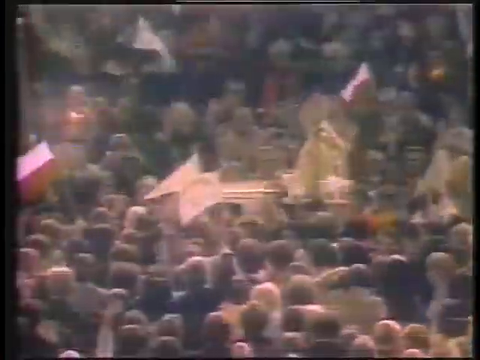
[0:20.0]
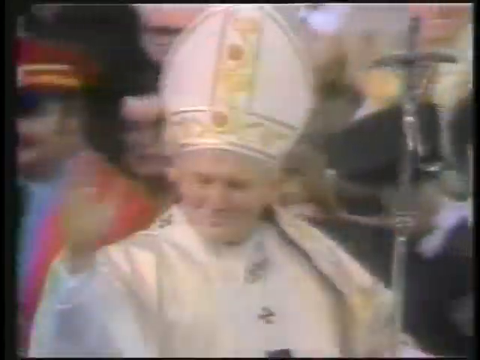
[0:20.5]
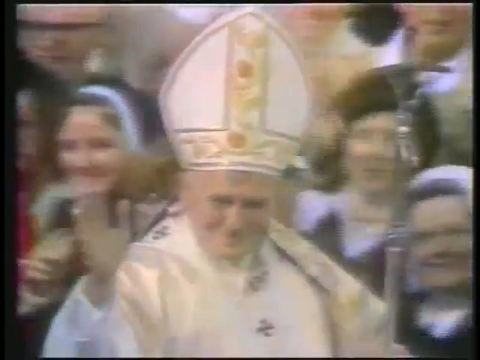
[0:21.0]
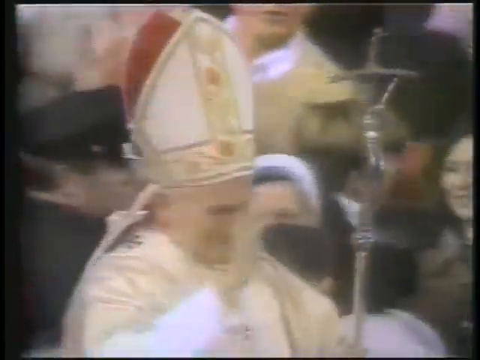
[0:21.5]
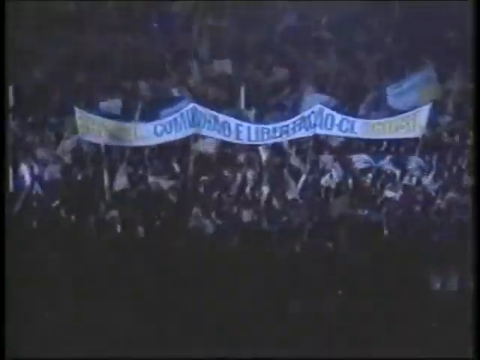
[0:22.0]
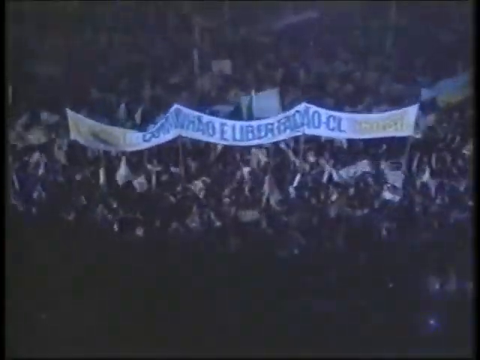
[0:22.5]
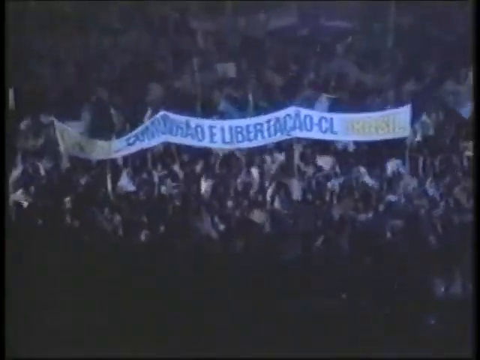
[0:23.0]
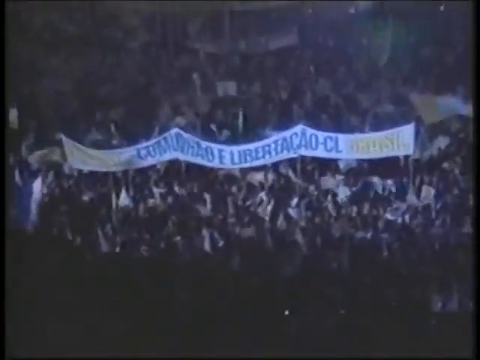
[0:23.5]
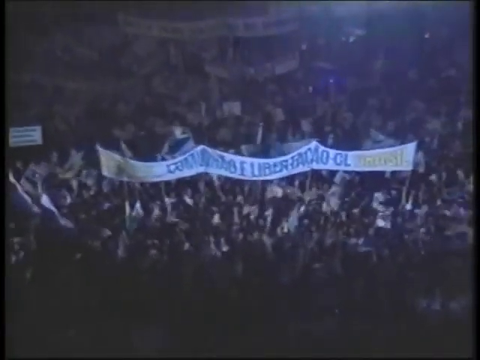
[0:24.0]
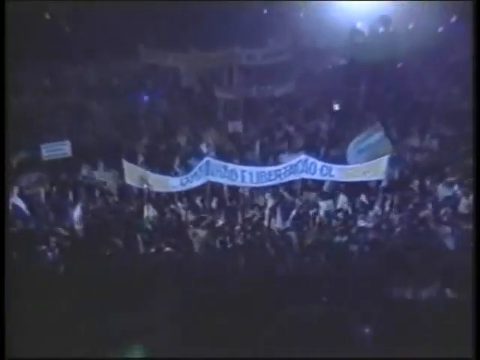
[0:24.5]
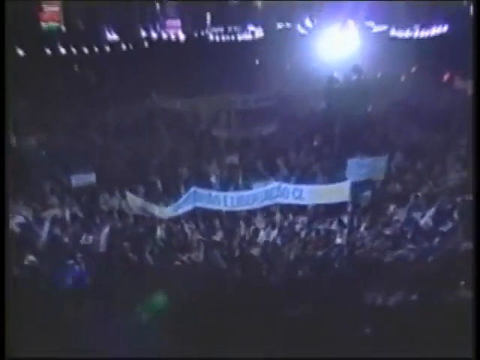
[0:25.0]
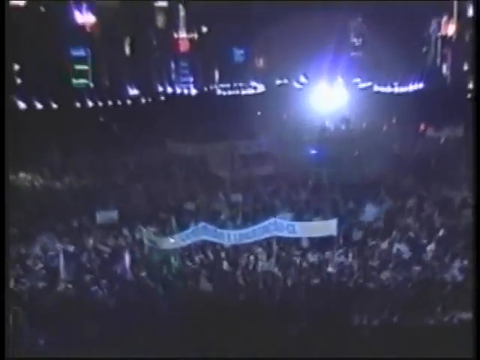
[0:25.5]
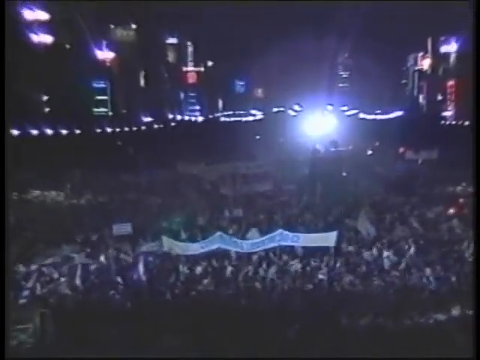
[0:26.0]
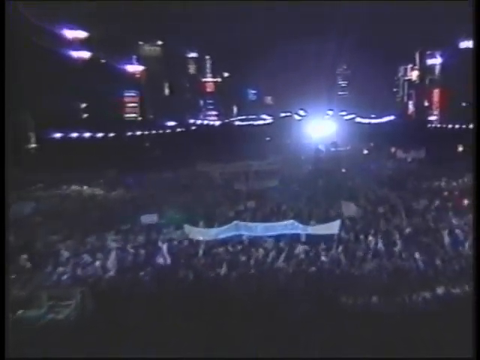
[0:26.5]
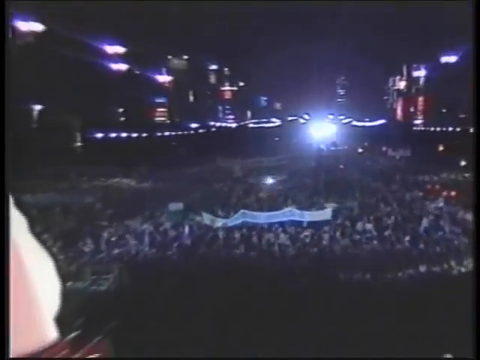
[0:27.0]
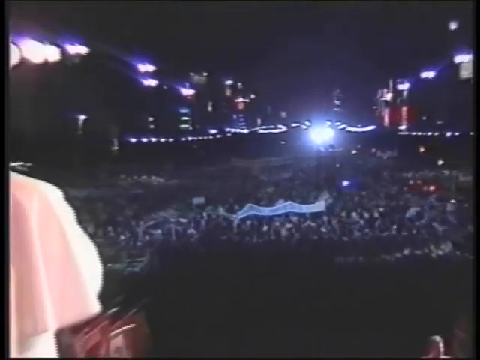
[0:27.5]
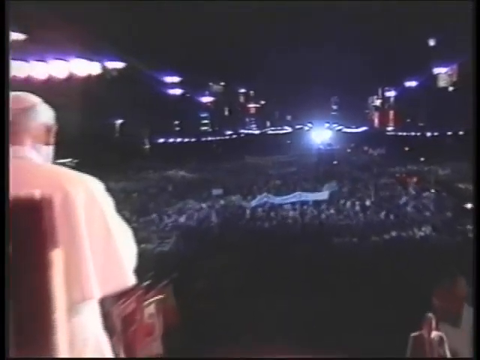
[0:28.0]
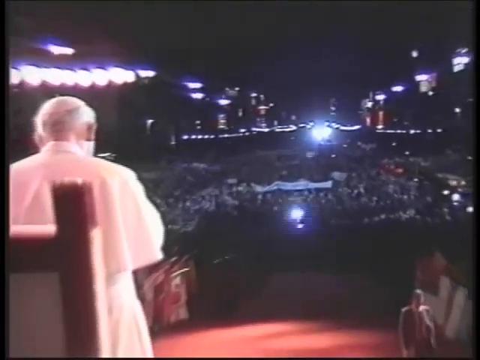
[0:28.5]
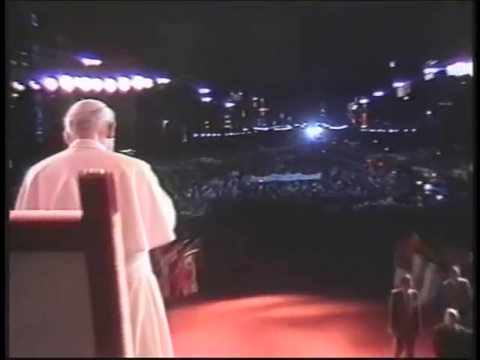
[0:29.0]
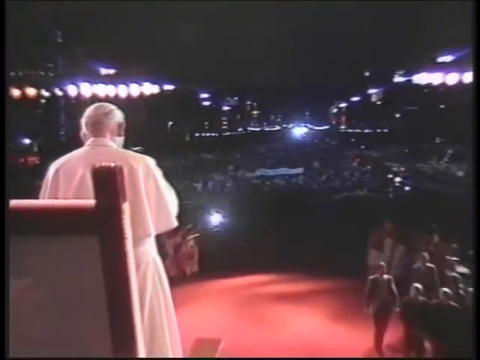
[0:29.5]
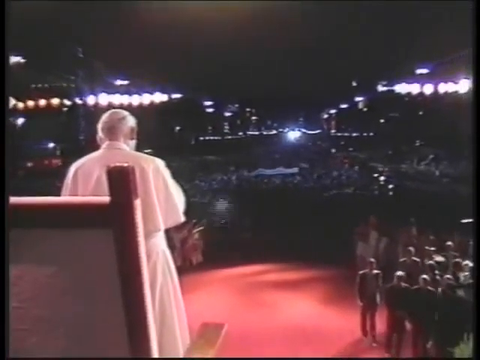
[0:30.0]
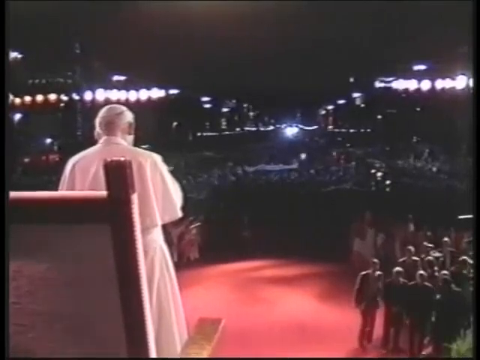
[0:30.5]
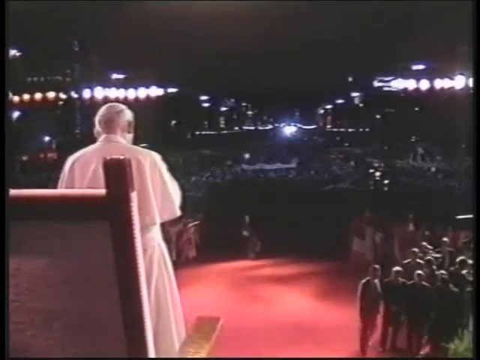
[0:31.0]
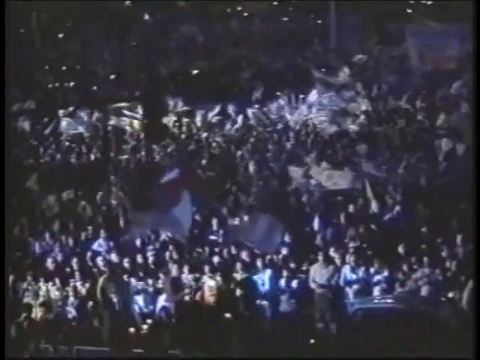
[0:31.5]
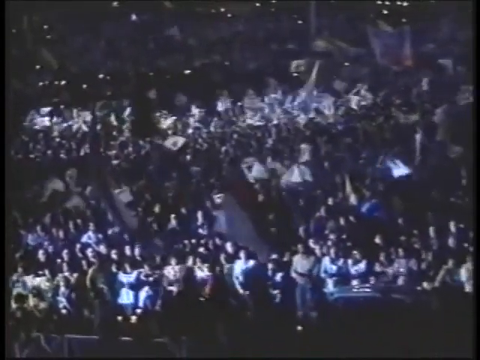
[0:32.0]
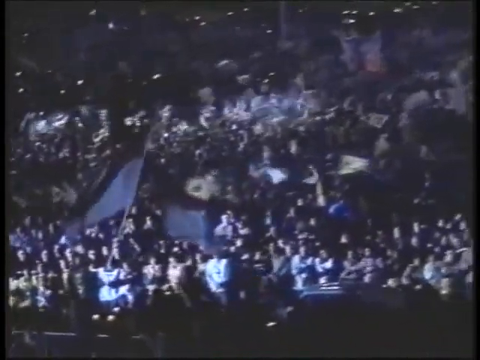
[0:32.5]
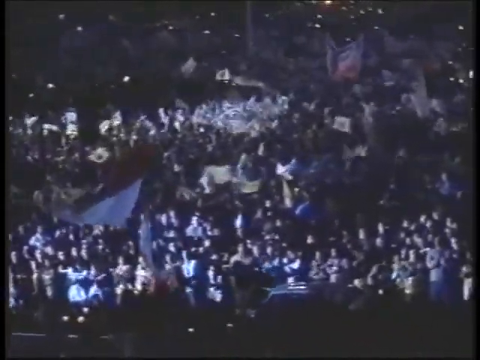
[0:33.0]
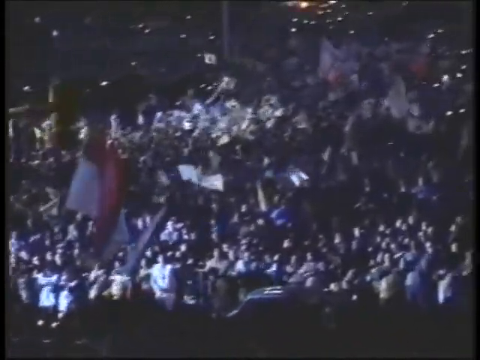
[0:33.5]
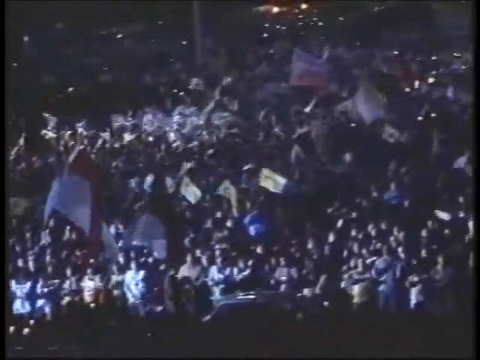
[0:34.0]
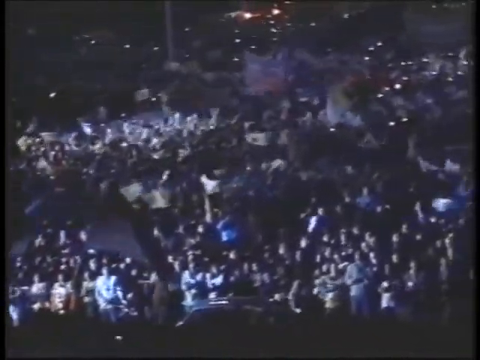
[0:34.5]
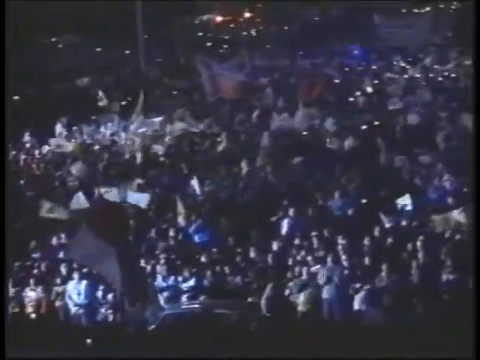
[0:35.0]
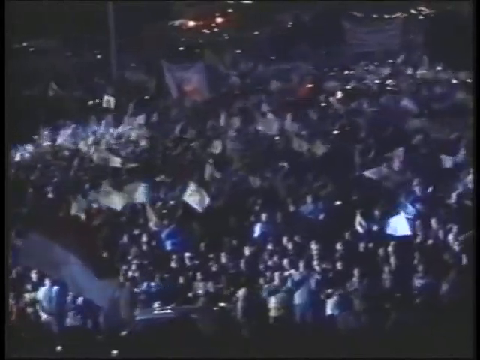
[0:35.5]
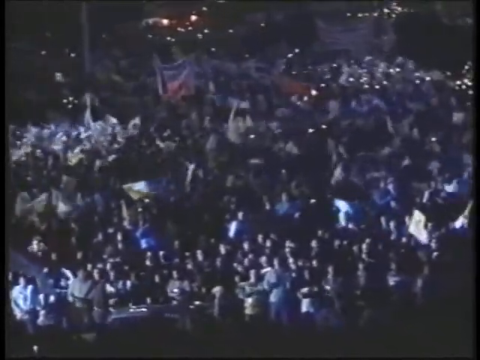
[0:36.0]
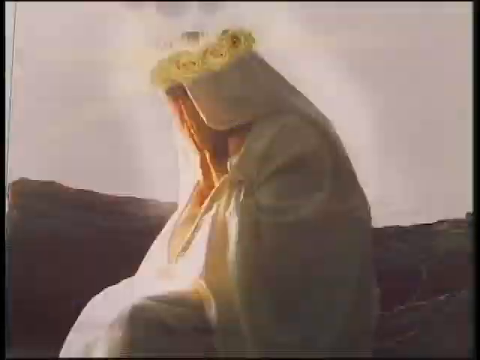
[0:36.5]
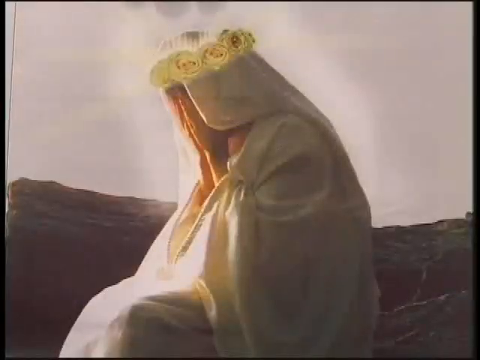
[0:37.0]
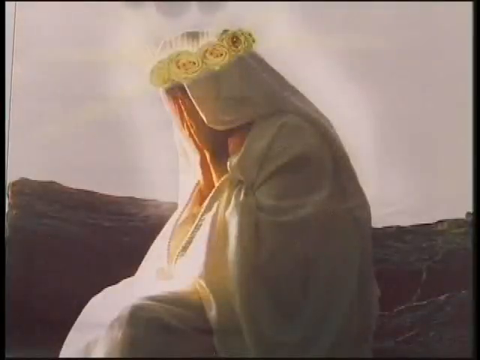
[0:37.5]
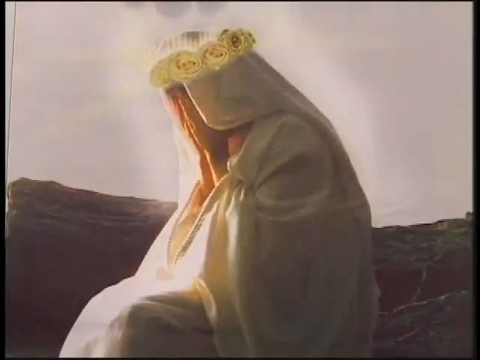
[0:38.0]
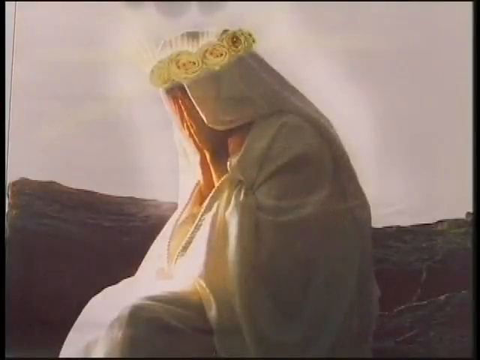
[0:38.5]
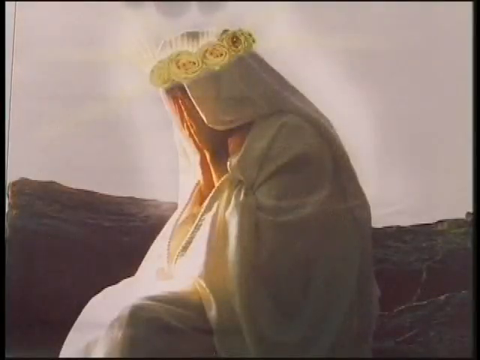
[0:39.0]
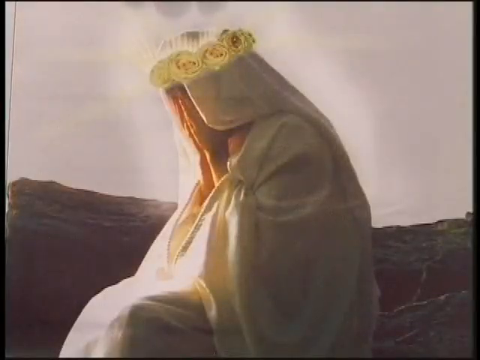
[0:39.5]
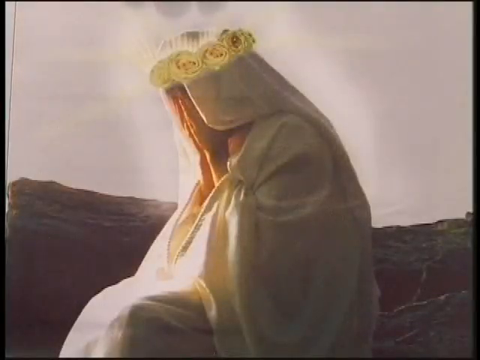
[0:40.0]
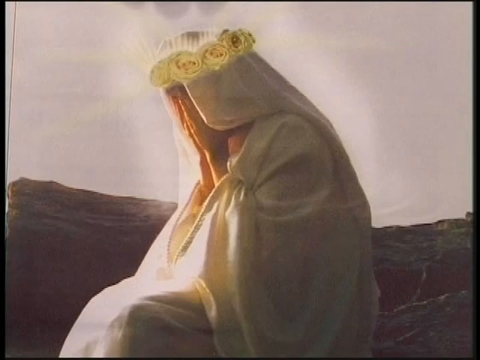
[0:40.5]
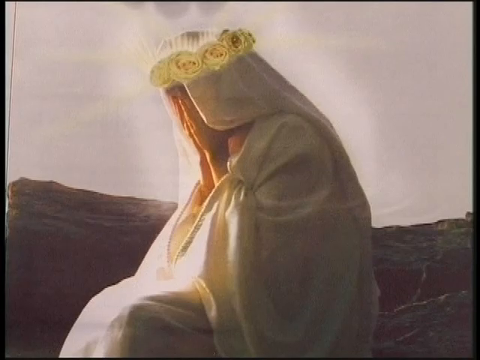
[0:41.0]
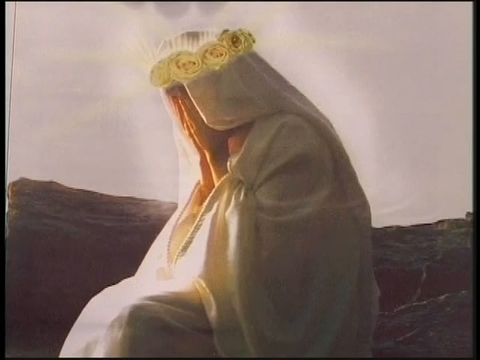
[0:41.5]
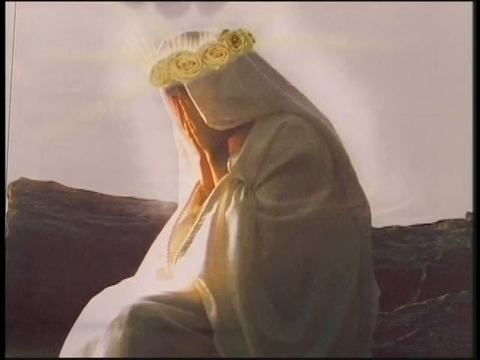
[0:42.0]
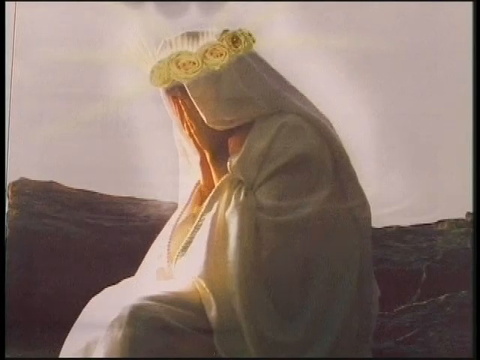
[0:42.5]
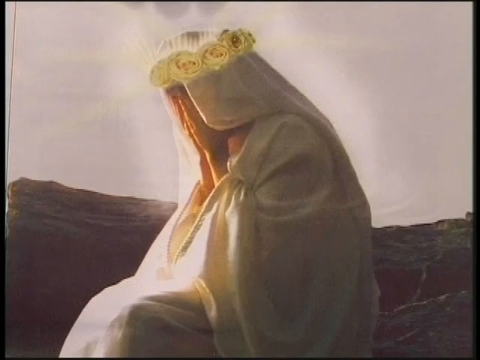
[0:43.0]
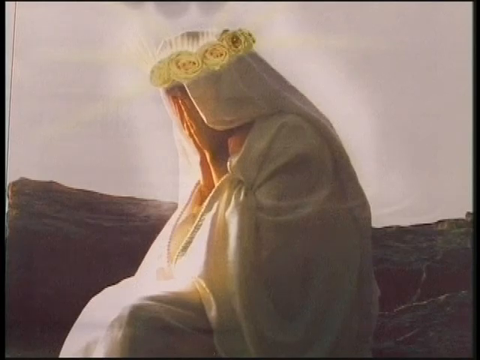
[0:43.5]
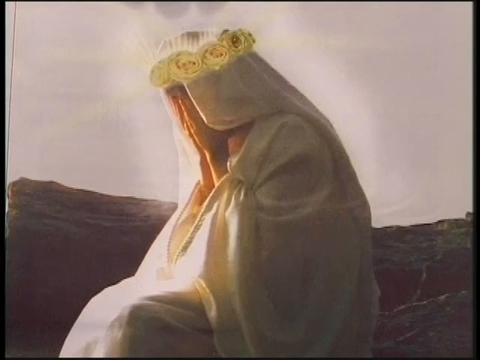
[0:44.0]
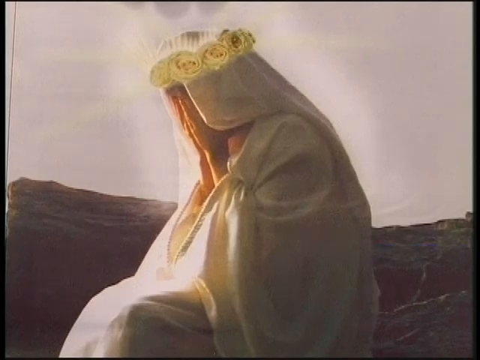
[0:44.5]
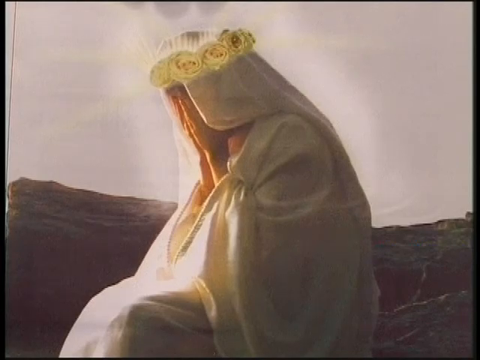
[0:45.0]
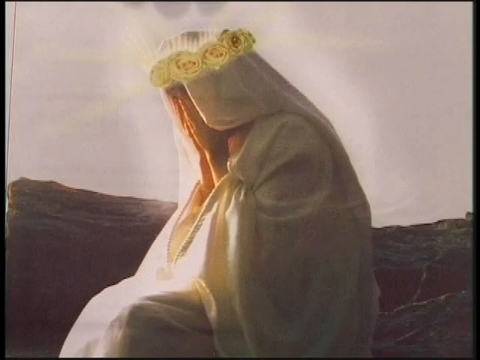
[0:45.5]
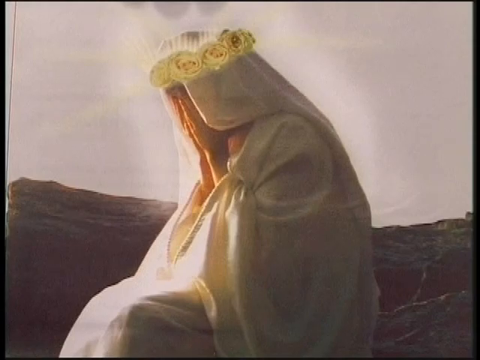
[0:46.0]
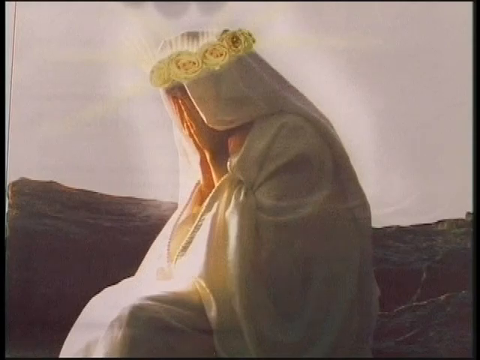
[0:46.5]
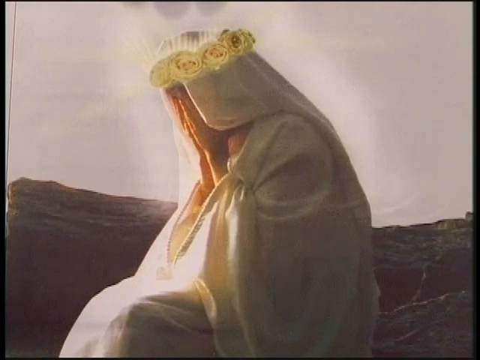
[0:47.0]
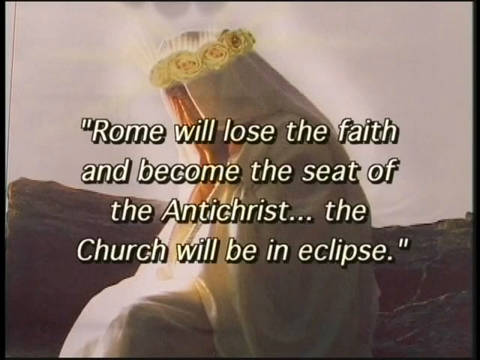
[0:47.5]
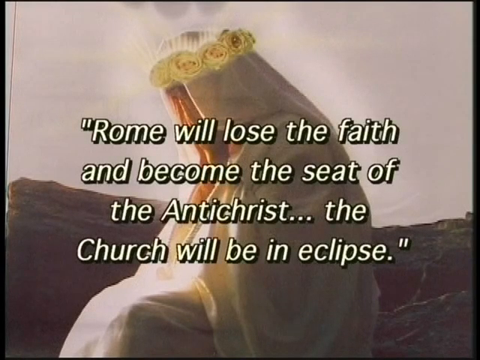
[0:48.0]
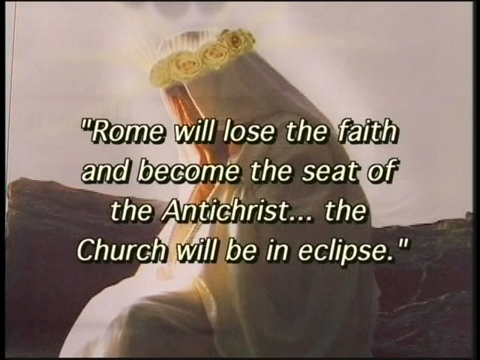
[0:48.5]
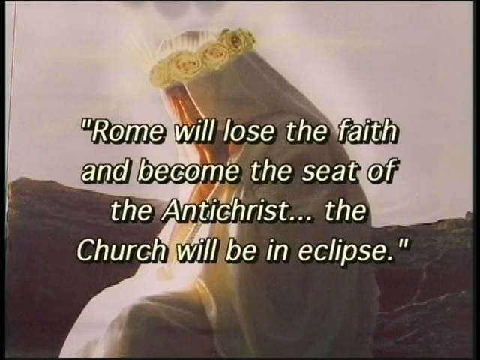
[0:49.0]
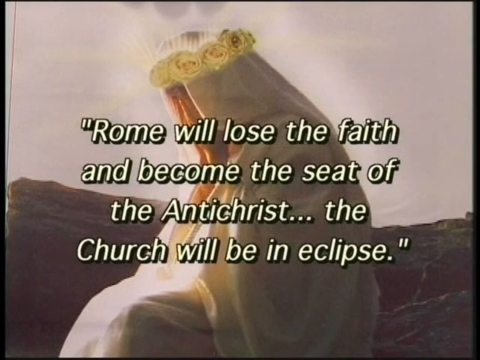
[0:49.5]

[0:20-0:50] In a close-up, the Pope holds a staff in his right hand topped by a cross with Jesus on it. The frame runs from the top of his headdress to the center of his chest. He waves his left hand to the crowd, wears all white, and smiles. His headdress goes to a peak and has an upside-down T pattern in the center. He waves while still in the car, which now moves from left to right as the camera pans around. The next scene is dark: people in the distance hold a long banner with Italian writing in blue across it. The banner is held at four points from left to right on stakes, dipping and rising between each point. The crowd moves and waves their arms, the banner waves from left to right, and the camera pans back. The banner is then in the center of the scene, somewhat in the distance, with buildings on either side; it is very late and dark, with some lights on the buildings. The image pans back to just beyond the Pope's chair, where the Pope stands in front of the chair with his back visible, wearing all white and a skull cap. Camera flashes go off, followed by a close-up of many flags waving. Then a still image shows a person wearing all white, sitting and facing left; the shawl covers the entire body, and only their hands are visible from beneath it, covering their eyes and face. A ring of flowers surrounds them, and a glowing light shines down onto the front of the person.